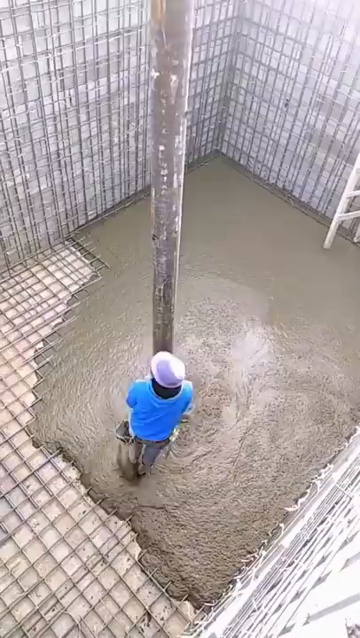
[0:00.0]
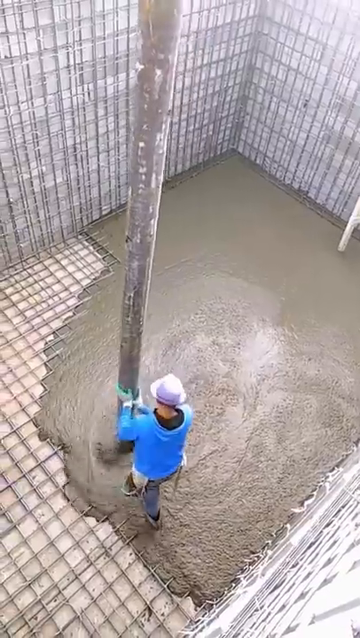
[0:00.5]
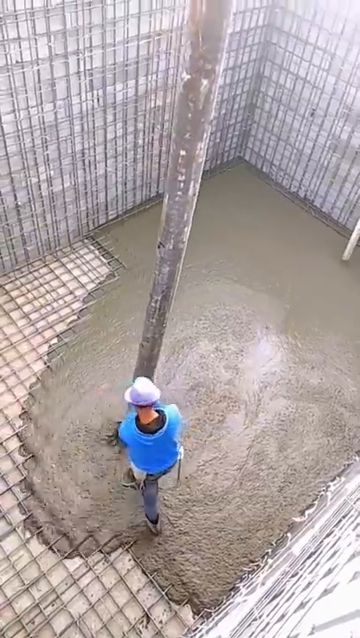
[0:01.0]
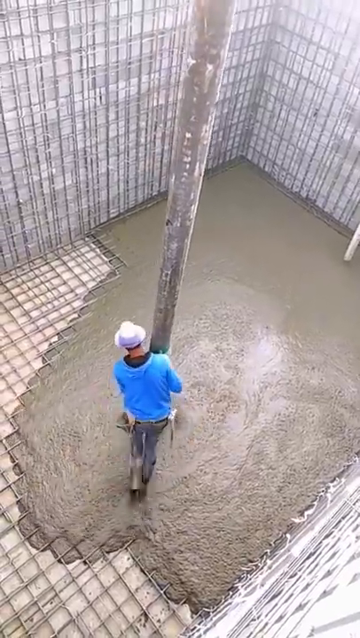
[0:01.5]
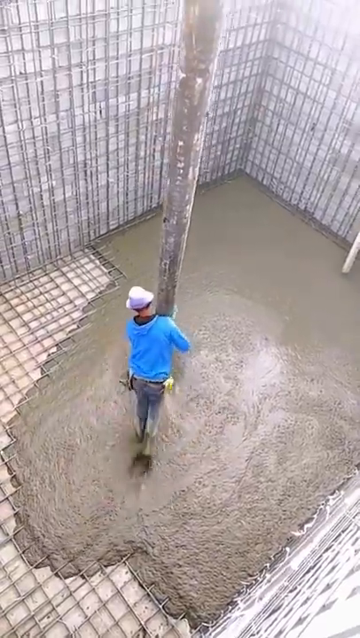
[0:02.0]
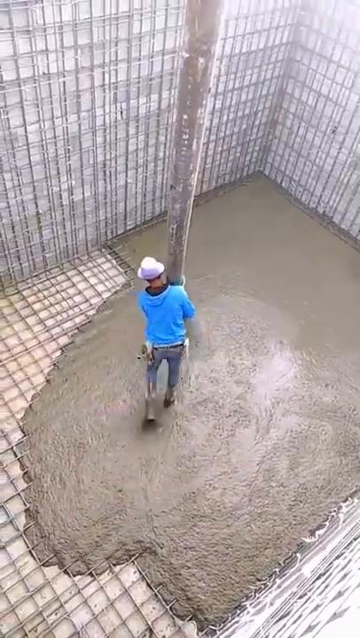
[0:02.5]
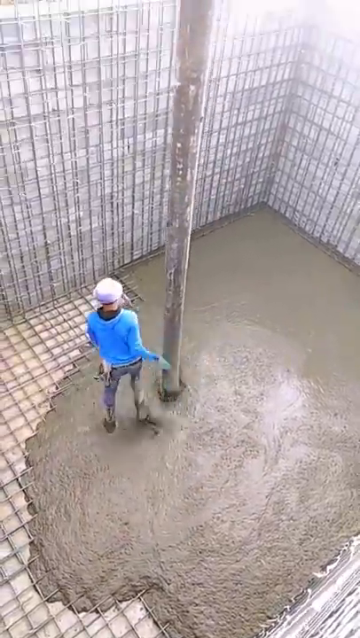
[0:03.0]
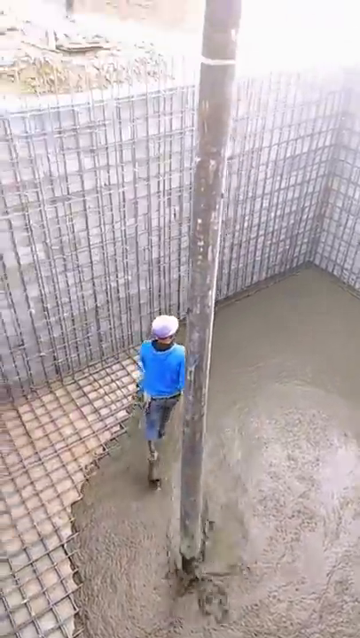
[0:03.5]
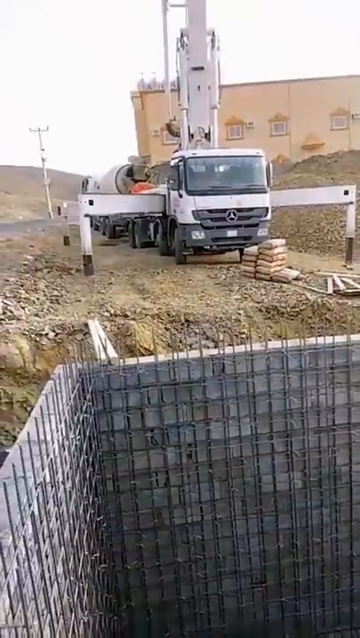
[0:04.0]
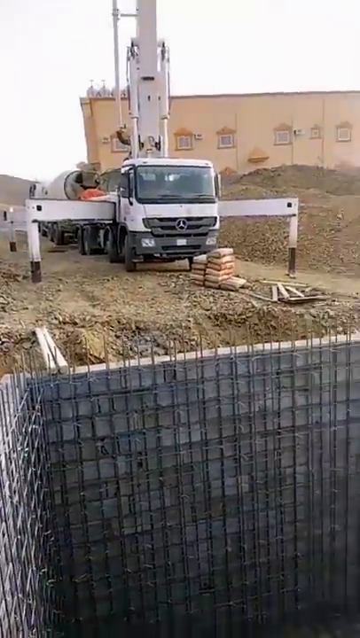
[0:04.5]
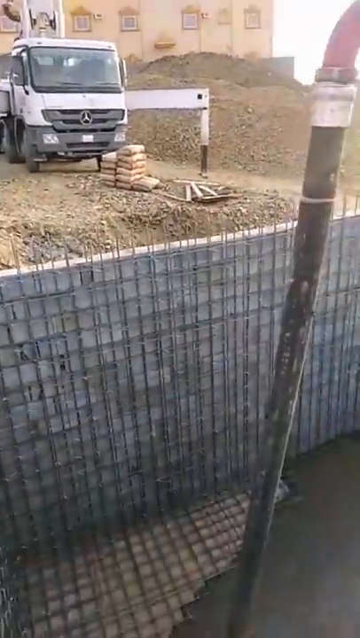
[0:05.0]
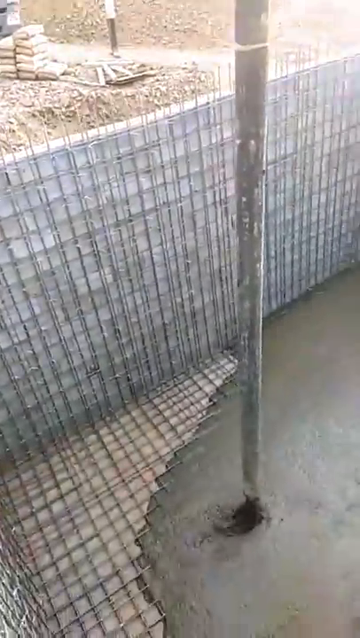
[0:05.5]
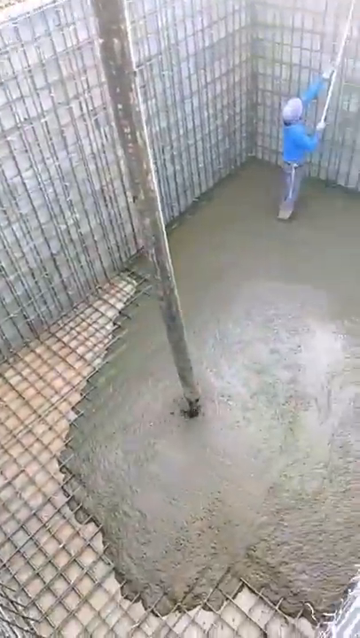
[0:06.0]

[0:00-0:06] Somebody is down in a very large structure shaped like either a square or a cube-like rectangle. The structure has cement walls and fence-like metal grating all along the bottom and the sides. The man grabs a long rubber hose that is hanging directly down and spreads it around on the floor. The hose is pouring what looks like either mud or, more likely, concrete onto the floor, and the man walks through it. He spreads it around a little to cover the center, but the sides on the left and toward the bottom of the camera view are still uncovered. The man then walks toward a white pipe on the right side and looks up at something, though it is not clear what. He wears a blue sweater, a white helmet or hat with a very wide brim, and brown pants that look a little dirty, possibly from the cement. When the camera pans up, a large white truck is visible on top, with large metal bracers in the ground to prevent it from moving back and forth.